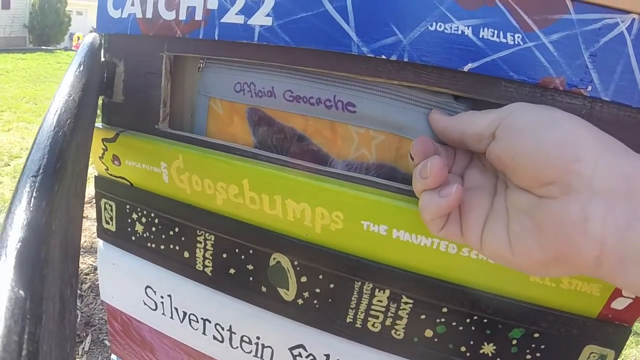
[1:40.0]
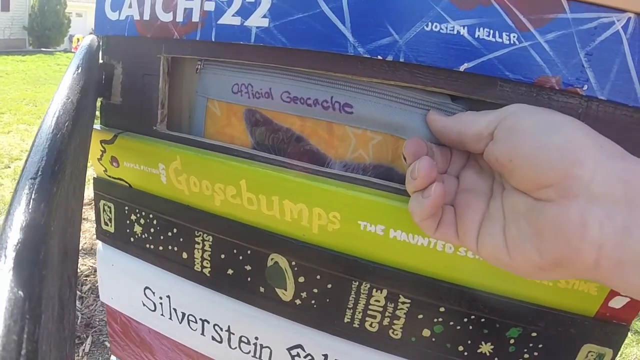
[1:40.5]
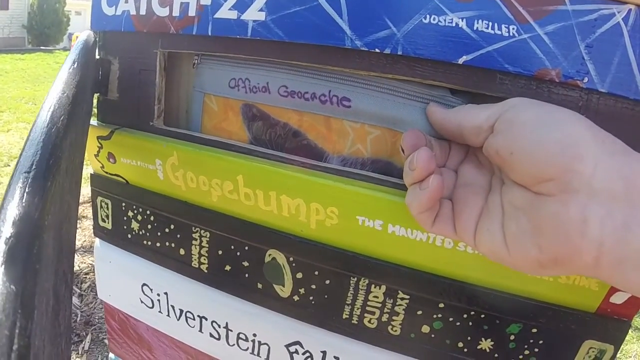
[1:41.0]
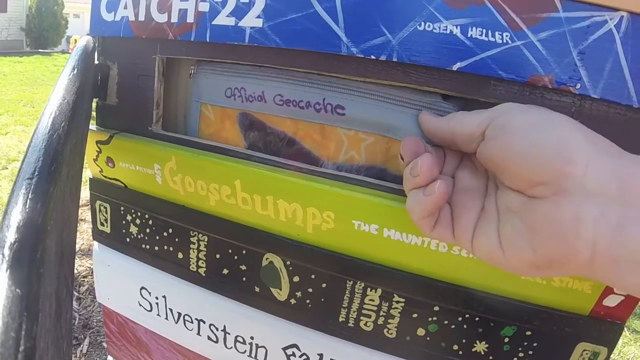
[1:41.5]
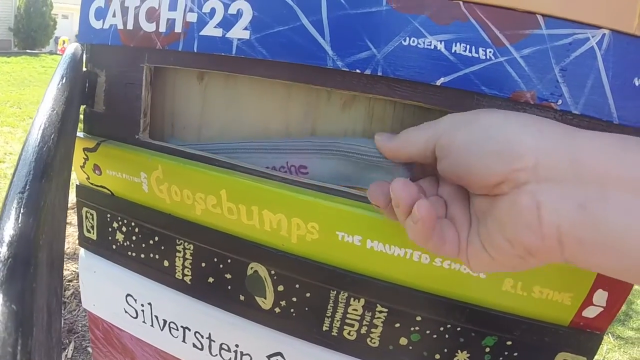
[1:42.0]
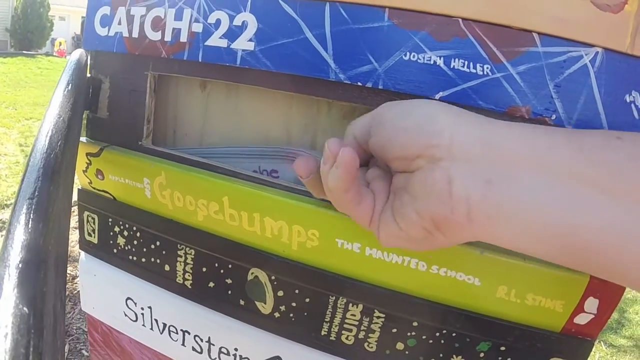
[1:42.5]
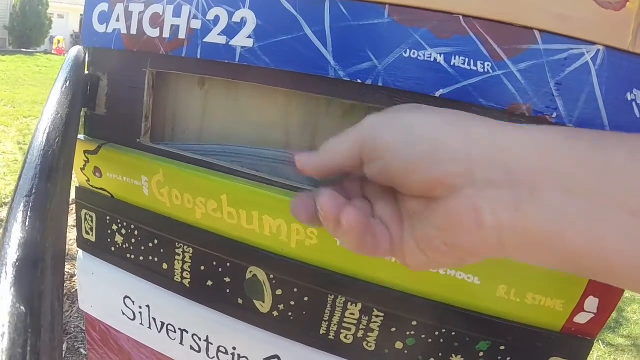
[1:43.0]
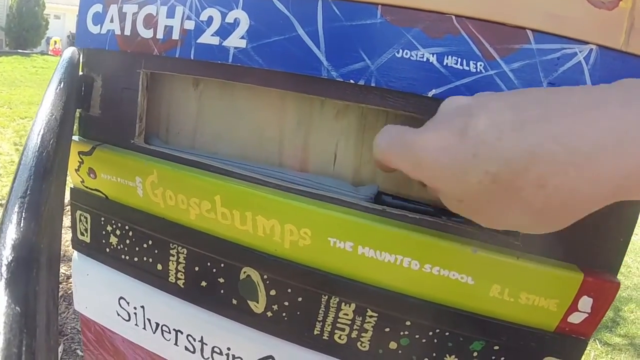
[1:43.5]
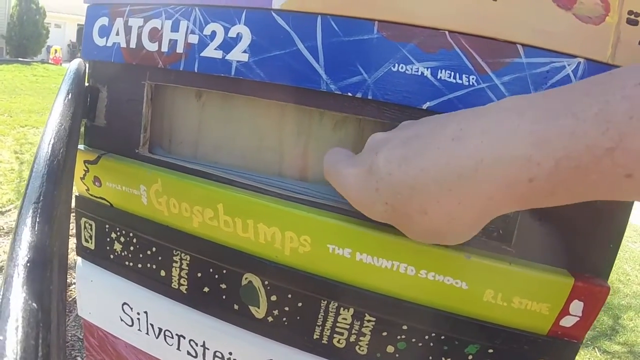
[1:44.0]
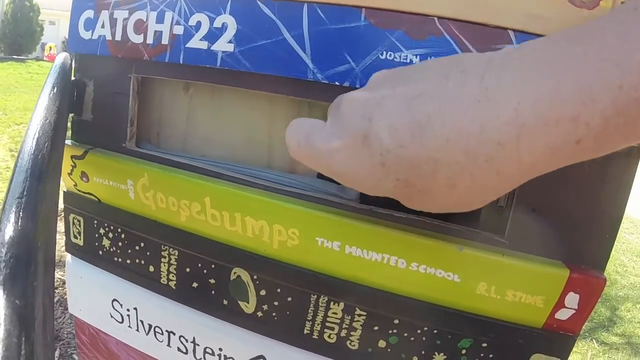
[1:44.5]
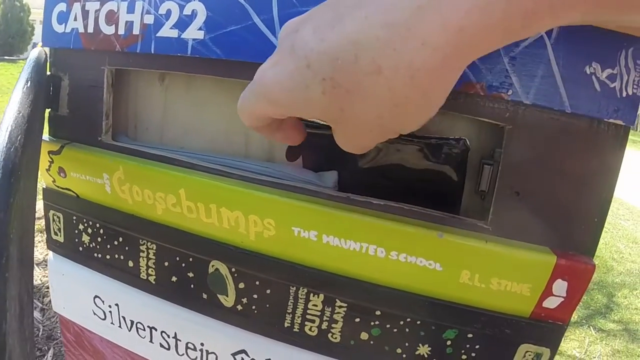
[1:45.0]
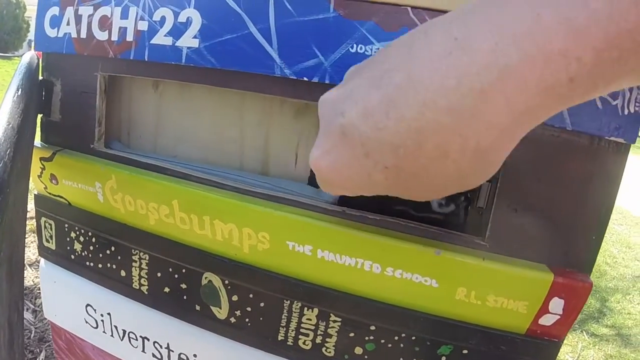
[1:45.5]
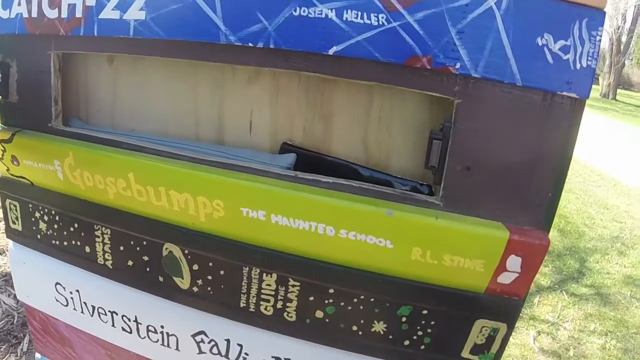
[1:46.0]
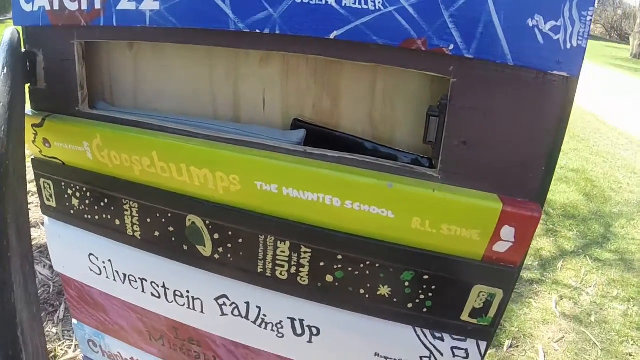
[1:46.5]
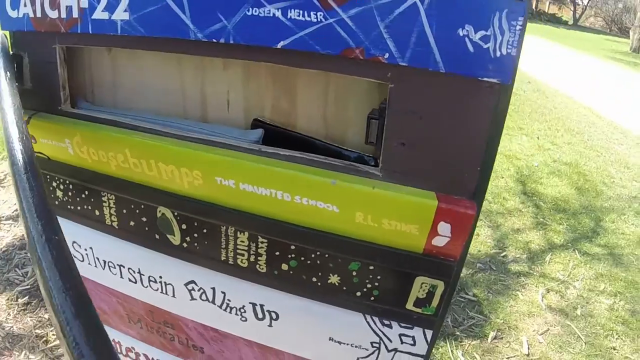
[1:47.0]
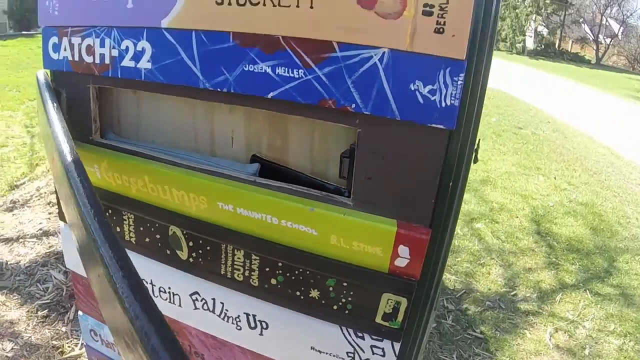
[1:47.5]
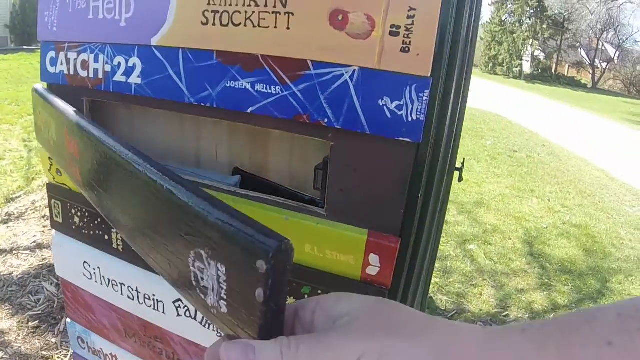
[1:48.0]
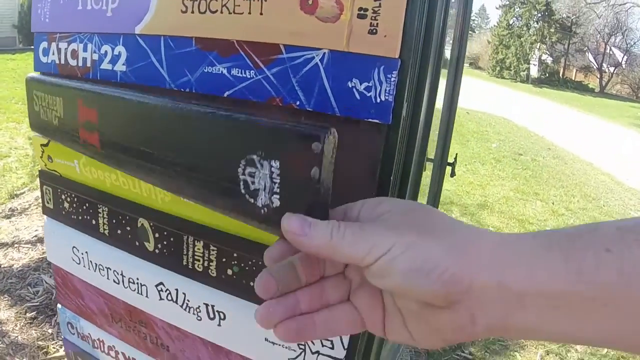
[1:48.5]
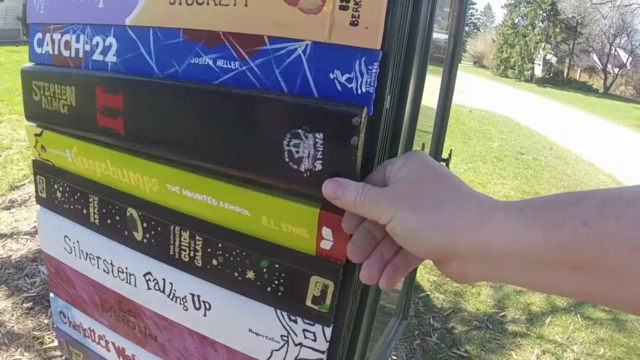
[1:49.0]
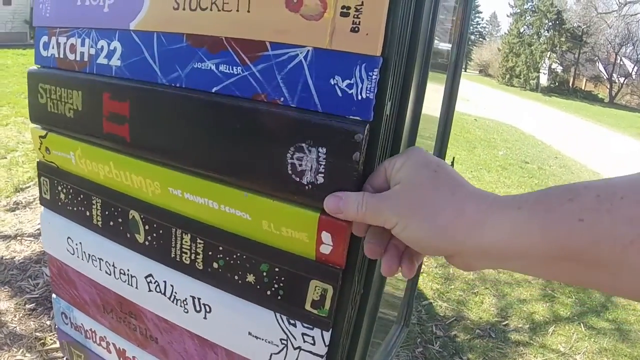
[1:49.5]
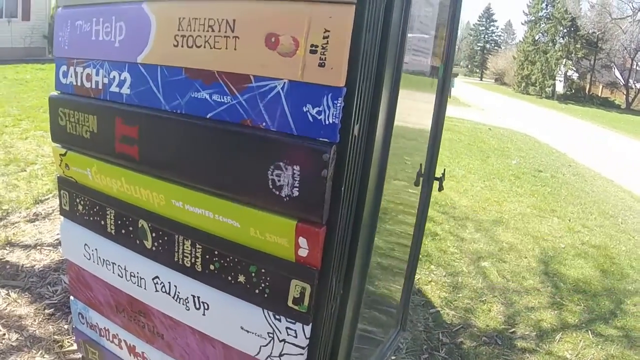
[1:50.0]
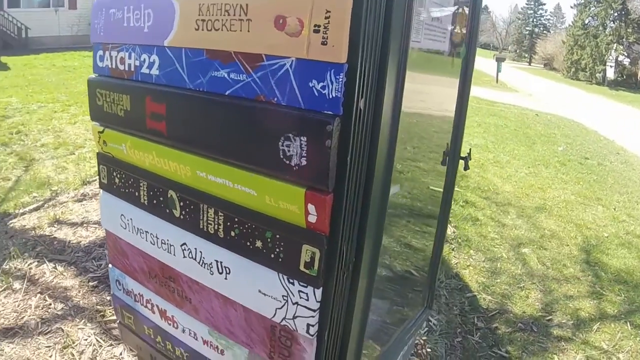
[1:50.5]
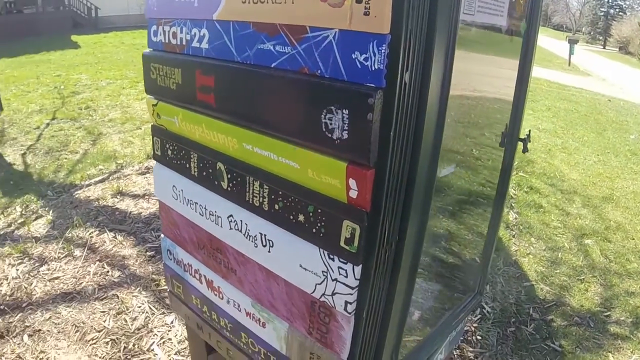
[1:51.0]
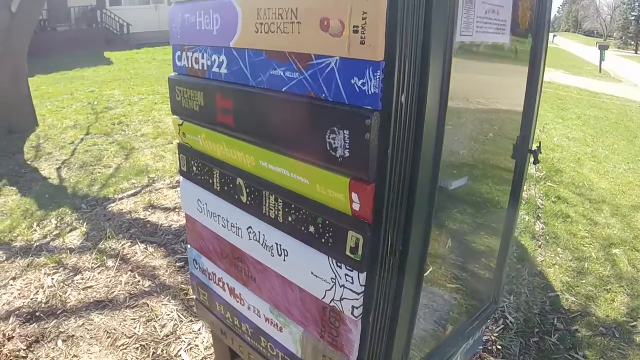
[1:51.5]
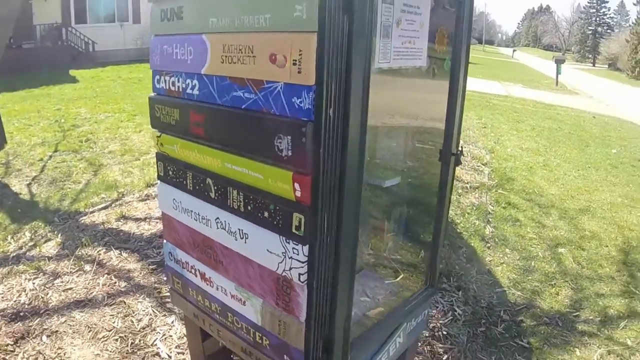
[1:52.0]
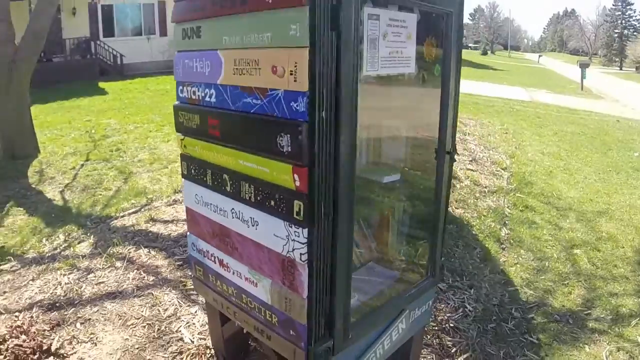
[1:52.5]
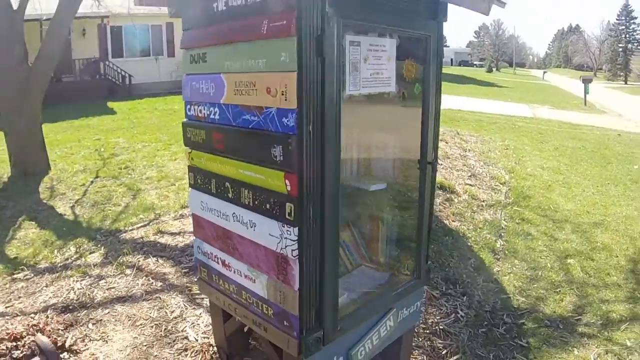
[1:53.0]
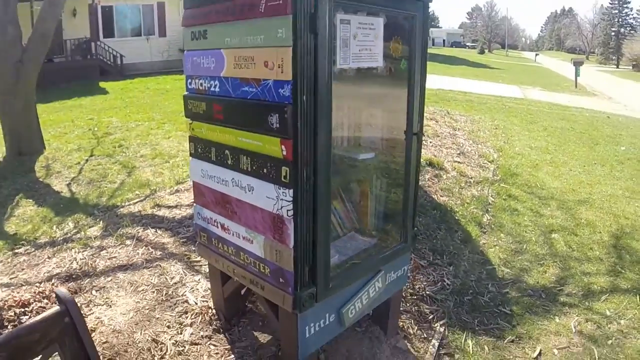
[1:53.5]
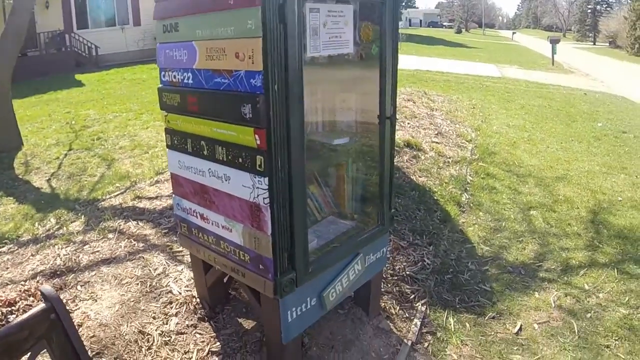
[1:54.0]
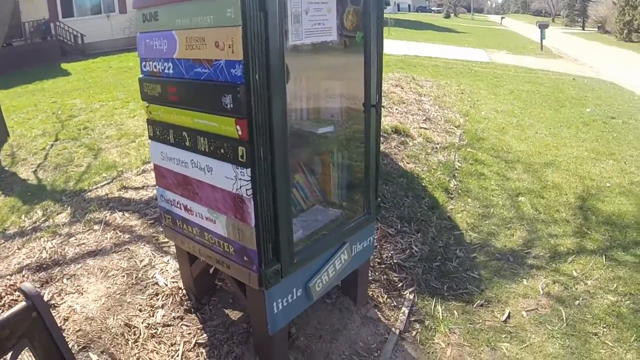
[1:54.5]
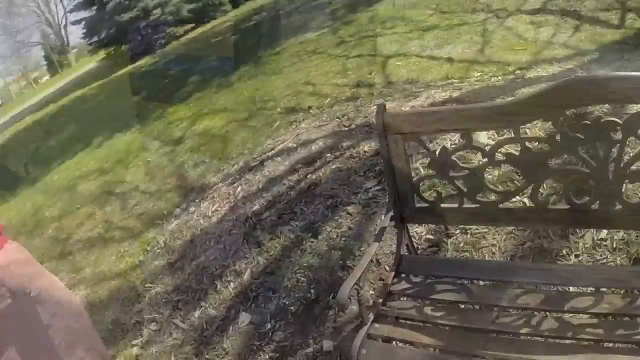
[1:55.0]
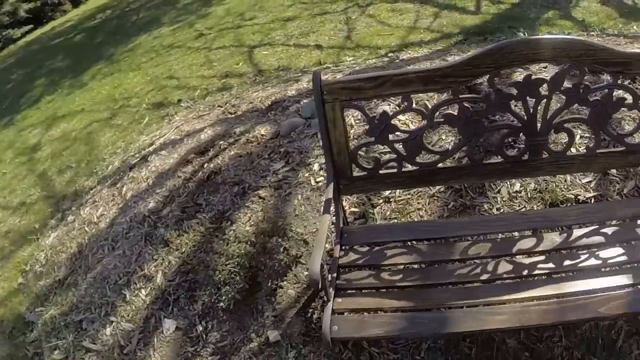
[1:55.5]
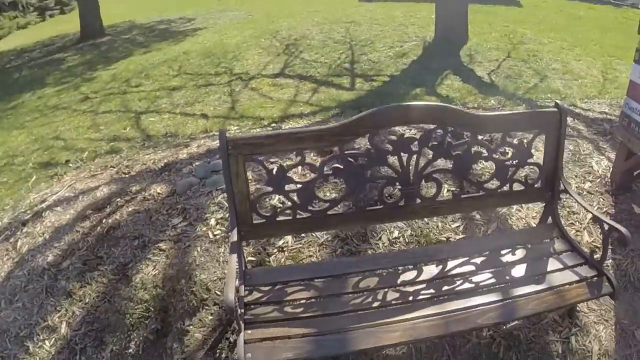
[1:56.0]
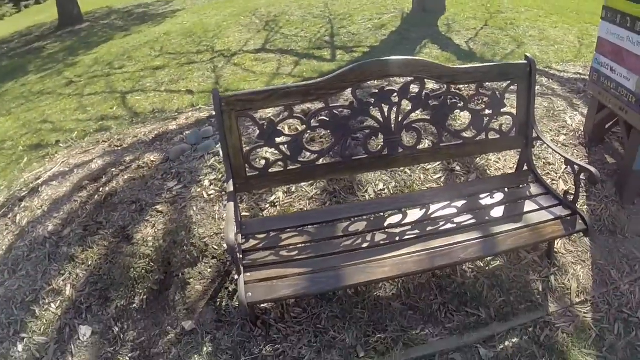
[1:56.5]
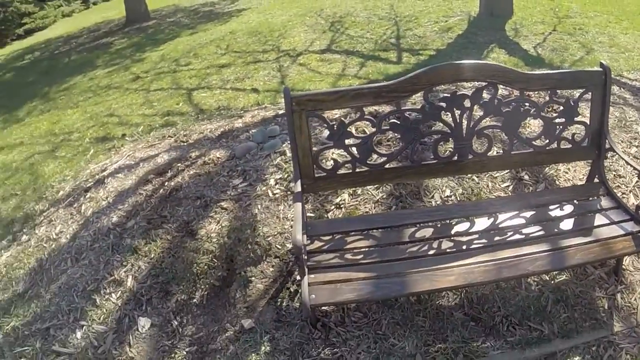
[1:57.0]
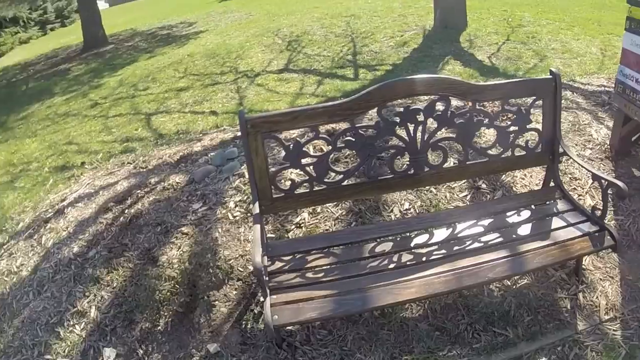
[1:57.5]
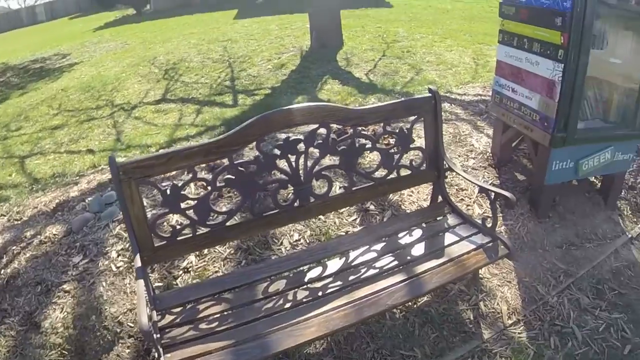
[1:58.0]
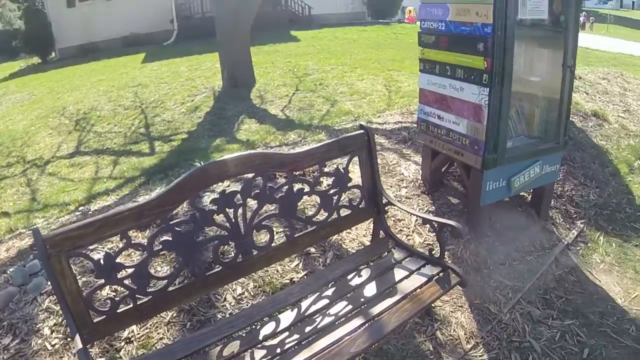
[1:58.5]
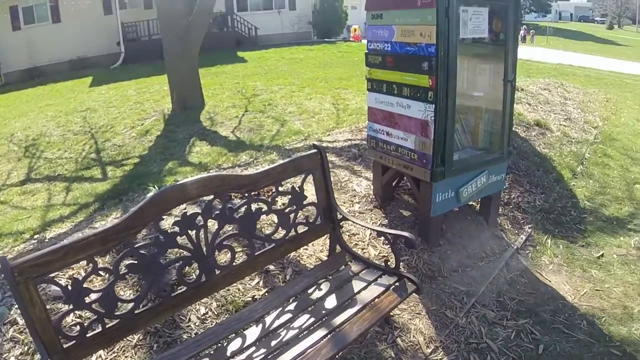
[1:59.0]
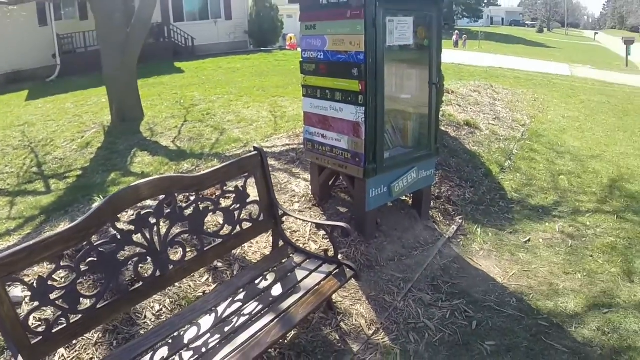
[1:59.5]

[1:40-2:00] The "official" envelope looks like a geocache envelope and maybe has a cat image on it. Next to it is another small black plastic envelope or something similar. He closes the fake-looking Stephen King book cover over it and backs up. After what looks like a quick edit, the shot shows the empty bench to the left of the book nook, then pans out a little to show the empty bench and the book nook together.